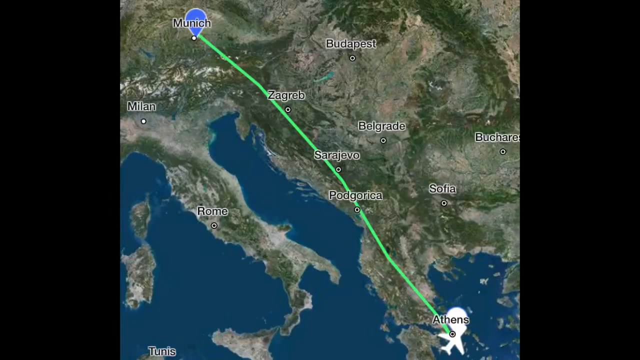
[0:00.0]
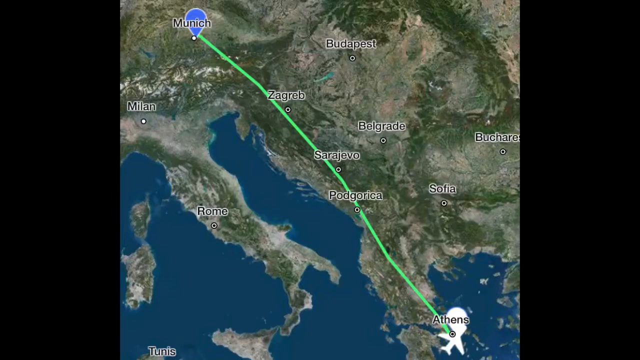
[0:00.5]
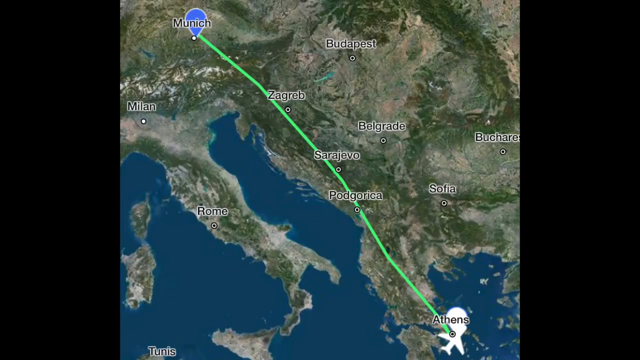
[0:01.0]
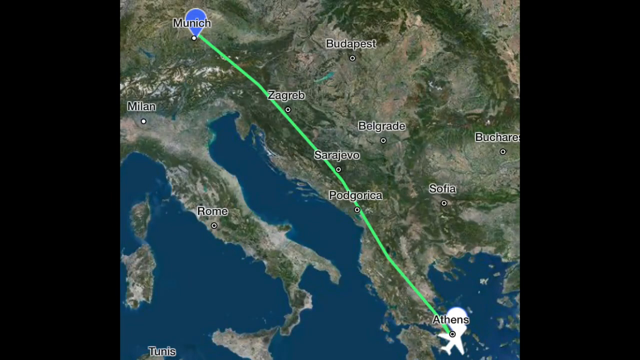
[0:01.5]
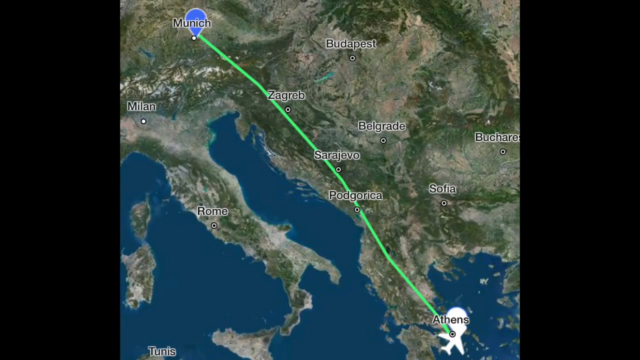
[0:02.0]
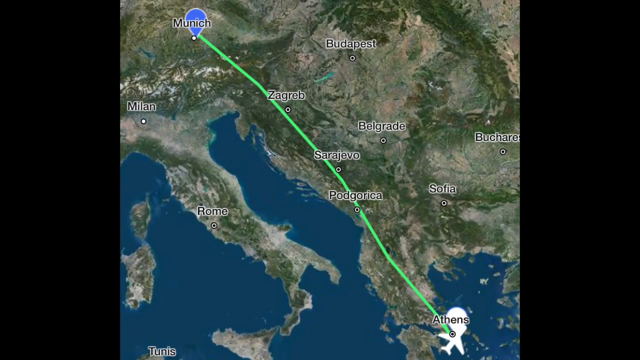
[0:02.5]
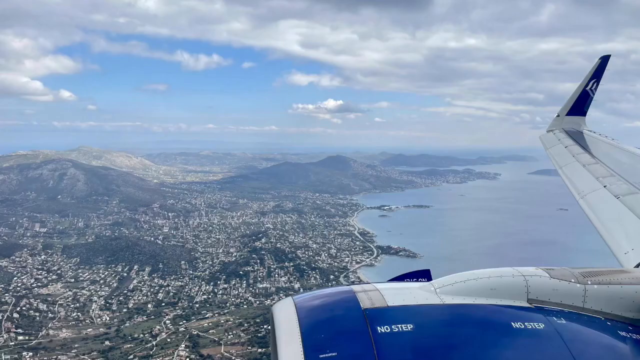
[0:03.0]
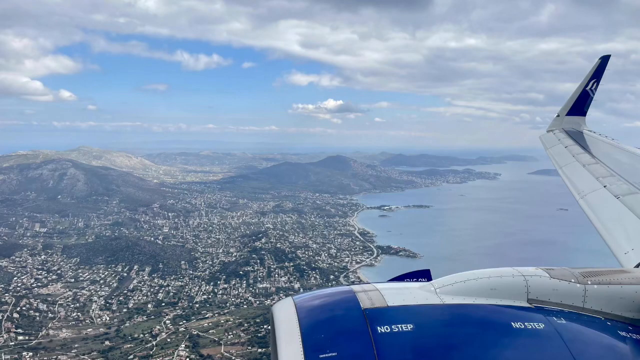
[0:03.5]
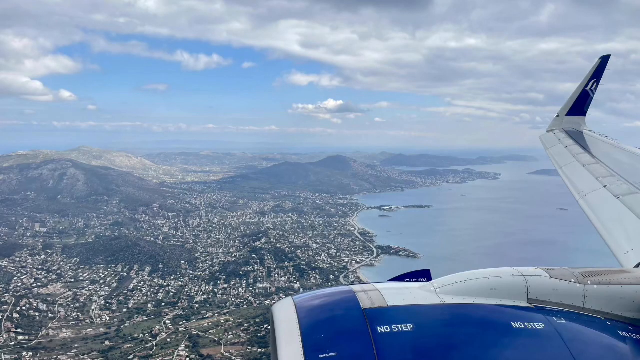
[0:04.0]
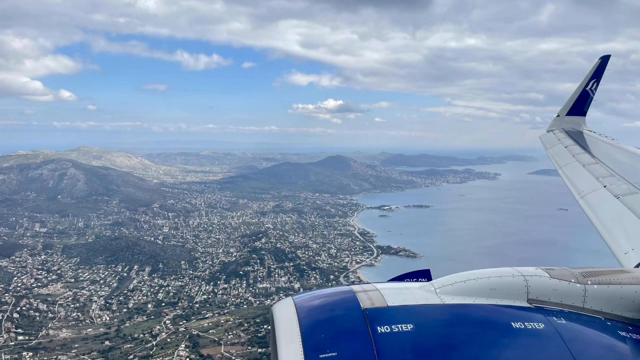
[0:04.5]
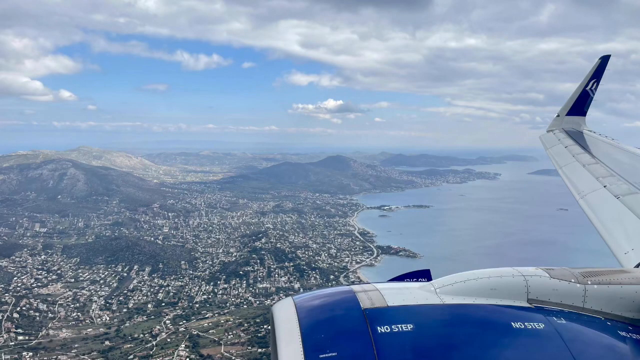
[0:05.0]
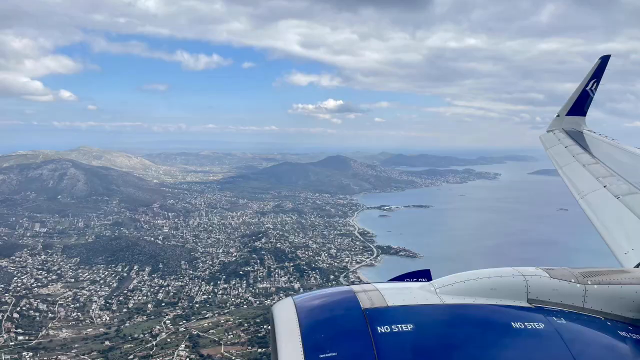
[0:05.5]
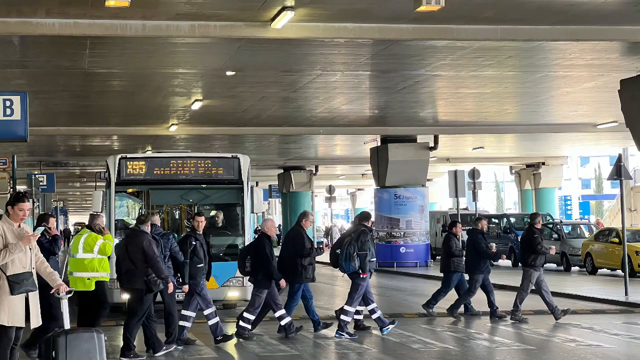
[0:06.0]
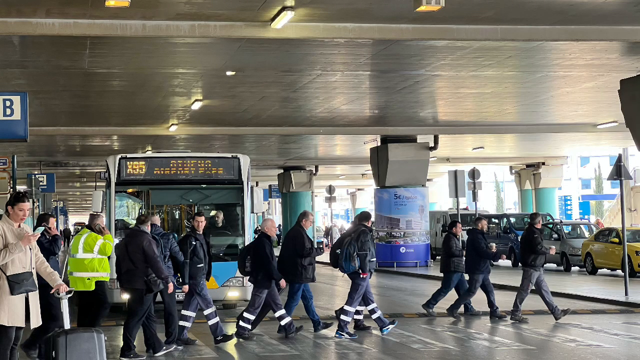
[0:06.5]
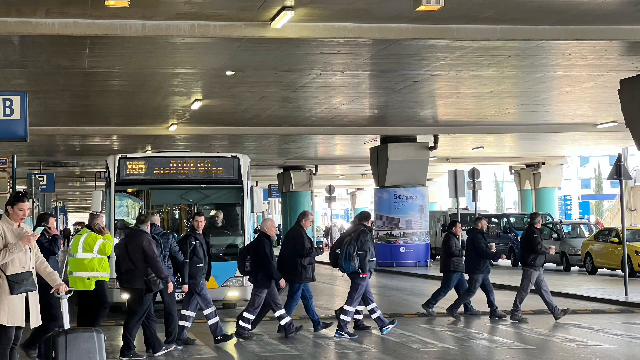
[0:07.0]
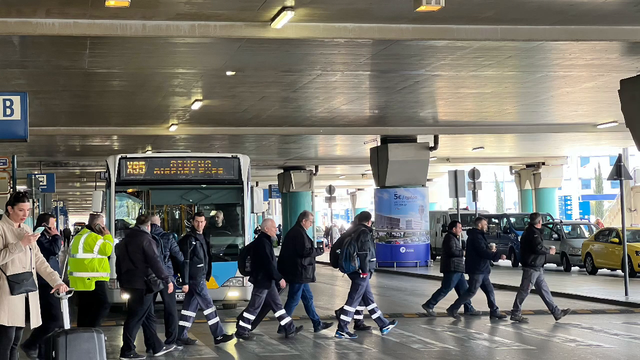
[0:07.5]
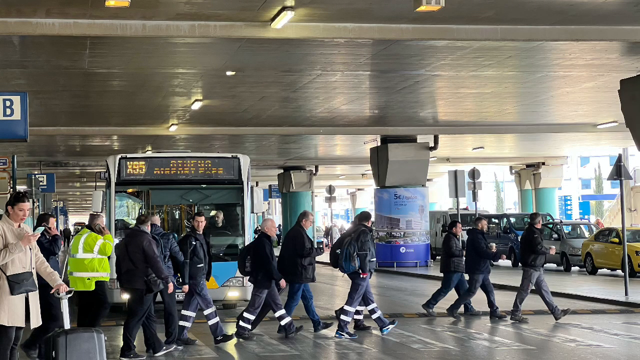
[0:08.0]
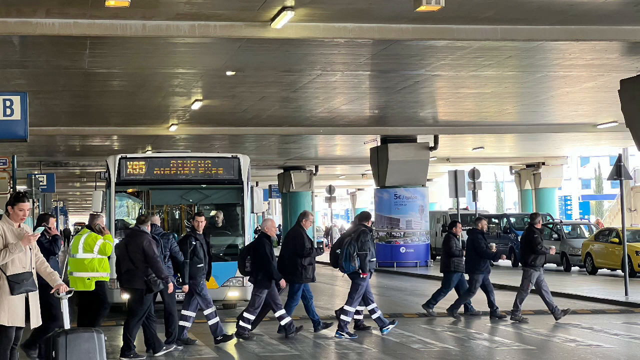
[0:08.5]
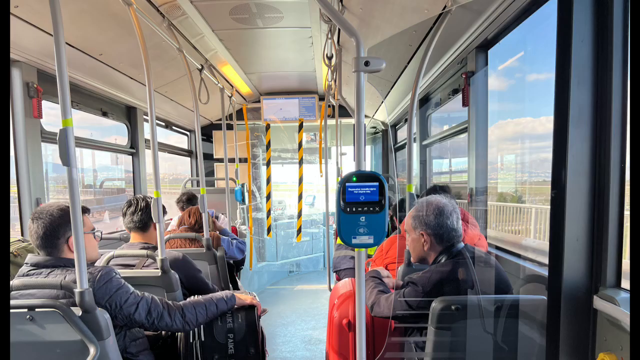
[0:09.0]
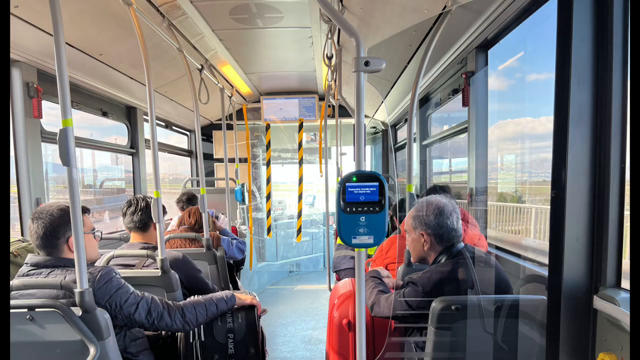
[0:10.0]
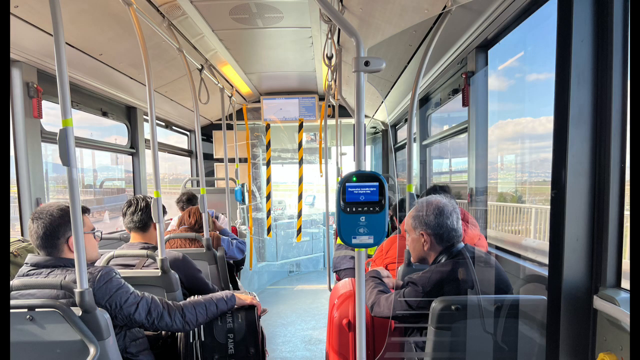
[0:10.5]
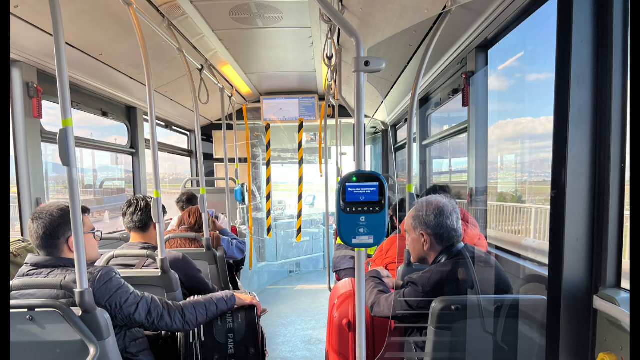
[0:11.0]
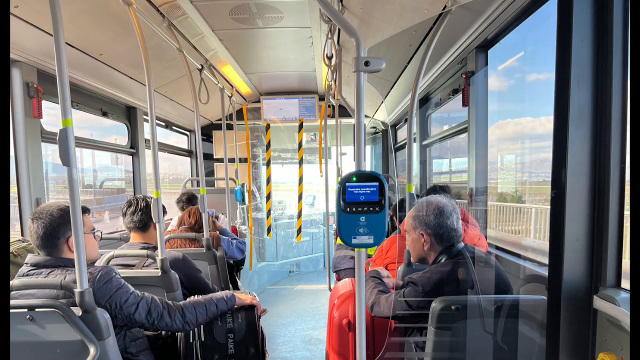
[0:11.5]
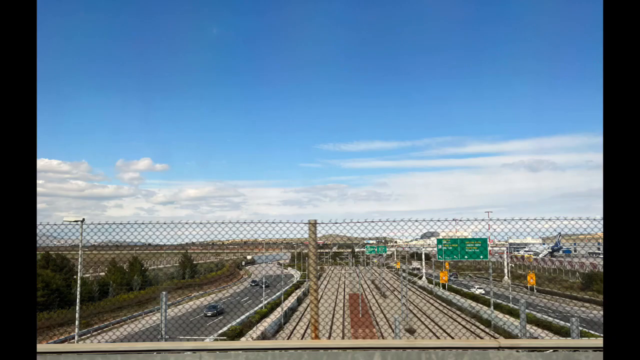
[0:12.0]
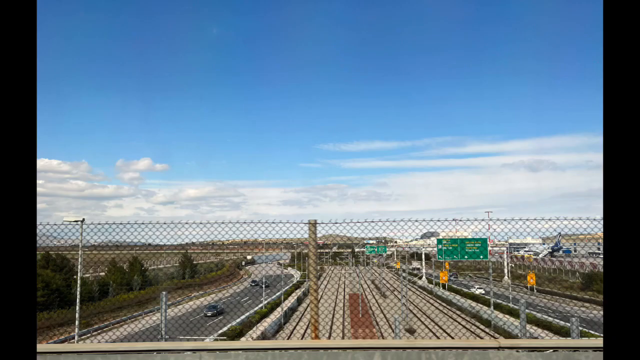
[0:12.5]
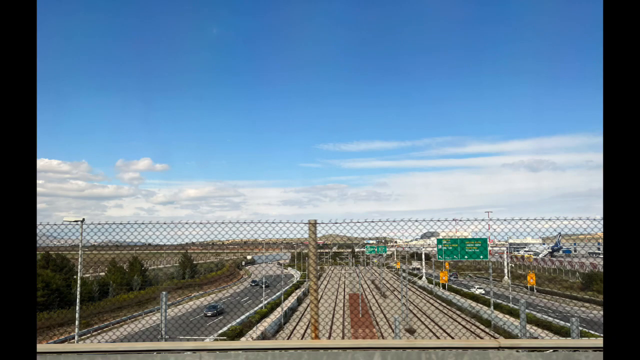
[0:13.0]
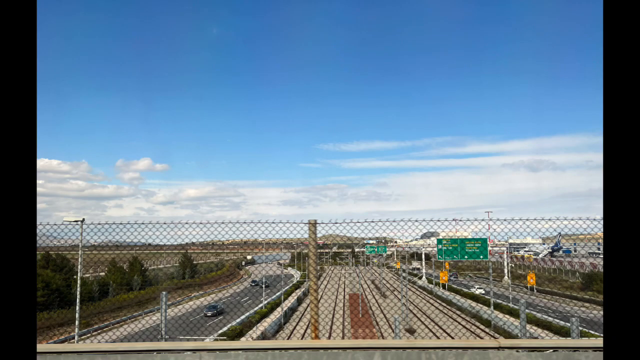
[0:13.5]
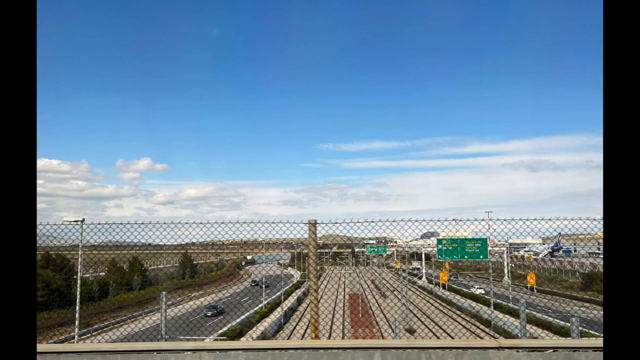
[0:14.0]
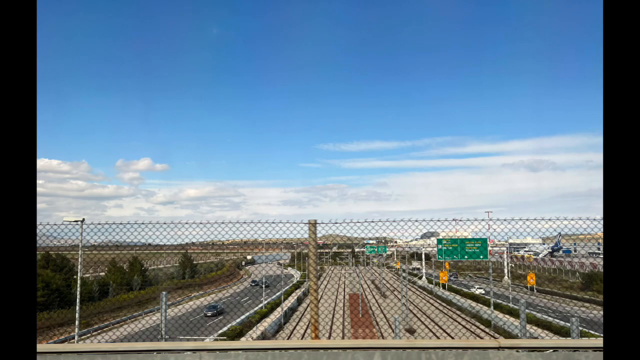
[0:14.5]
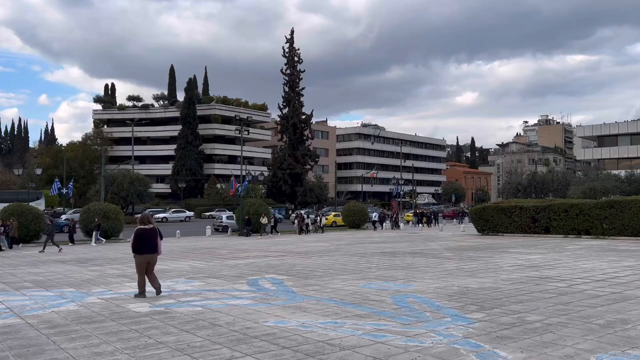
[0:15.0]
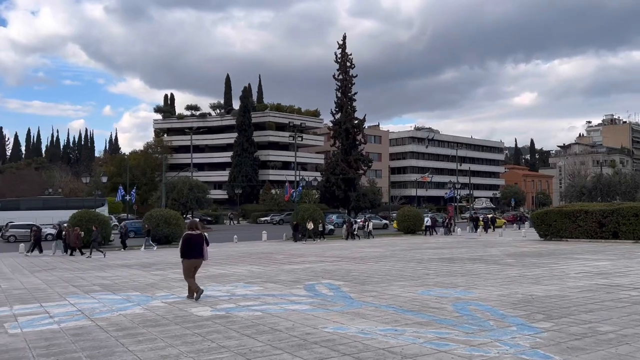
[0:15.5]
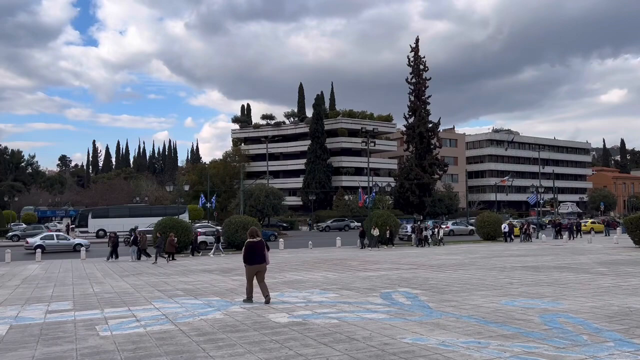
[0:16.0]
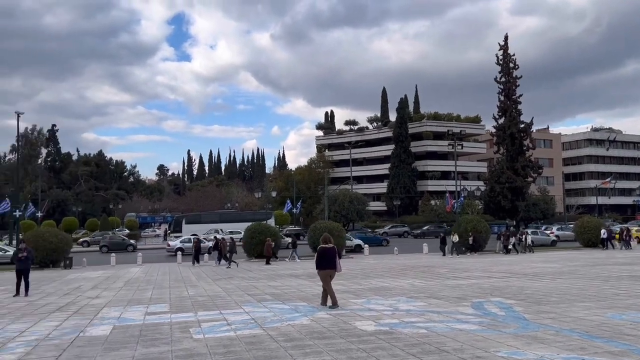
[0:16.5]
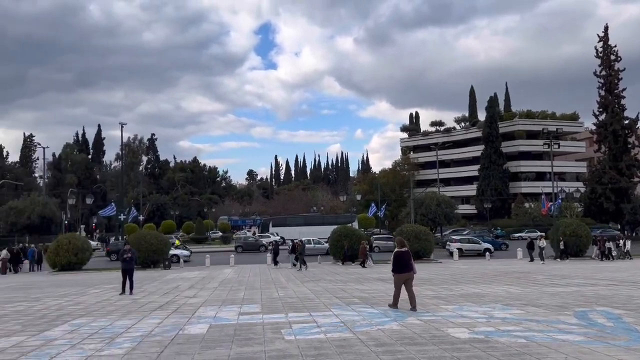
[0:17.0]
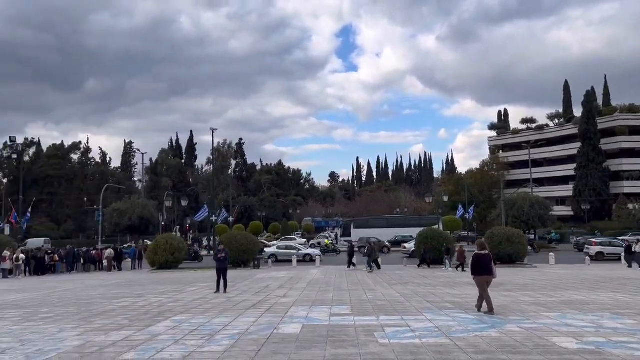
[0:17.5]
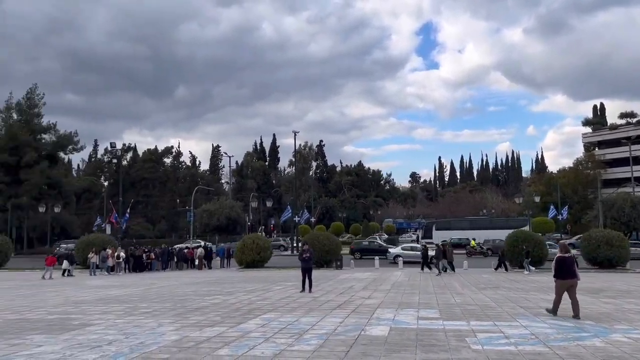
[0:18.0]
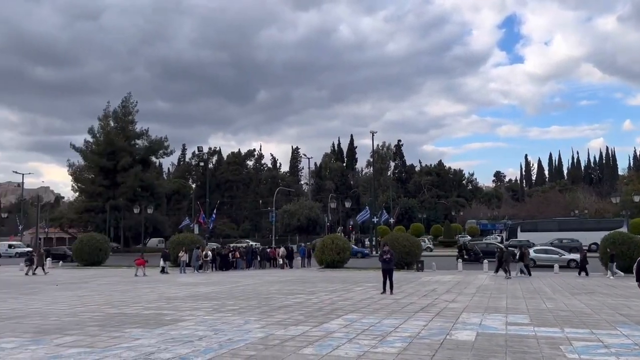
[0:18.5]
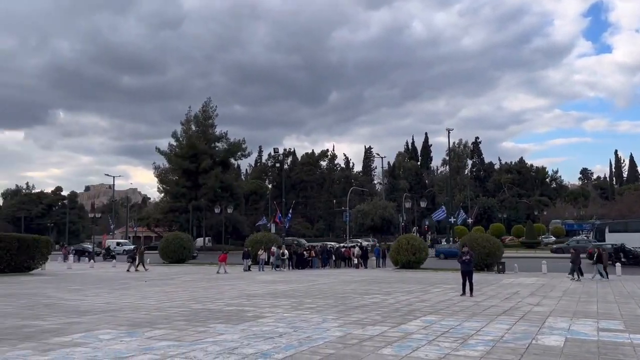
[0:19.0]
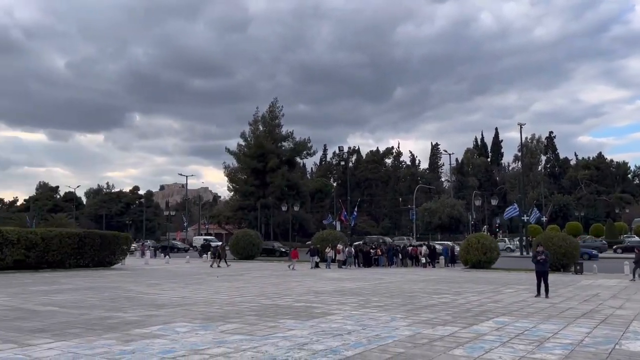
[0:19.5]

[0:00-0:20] A map appears, apparently showing travel from Munich down to Athens, with the route drawn as a bright neon green line. Surrounding areas on the map are labeled "Budapest", "Belgrade", "Sofia", "Bucharest", "Sarajevo", "Zagreb", "Milan" and "Rome". Next comes a view from an airplane, then people walking across an airport crosswalk and getting on an airport shuttle. A freeway with a fence follows, and then a cityscape: an urban area with lots of traffic, people walking and buildings in the background, apparently a modern part of Athens. The video then returns to the map.